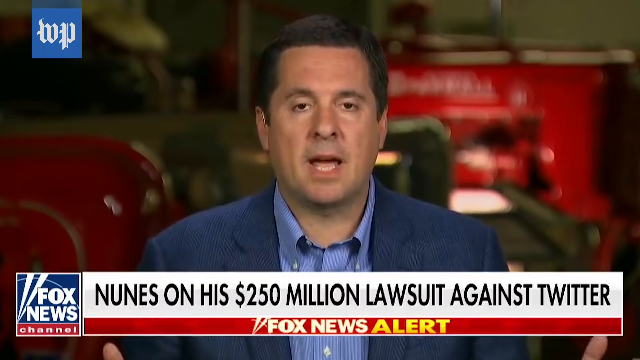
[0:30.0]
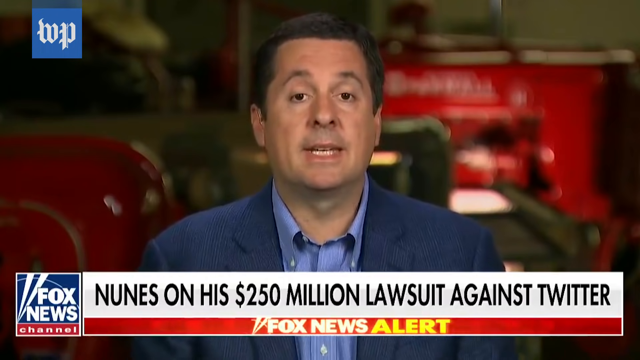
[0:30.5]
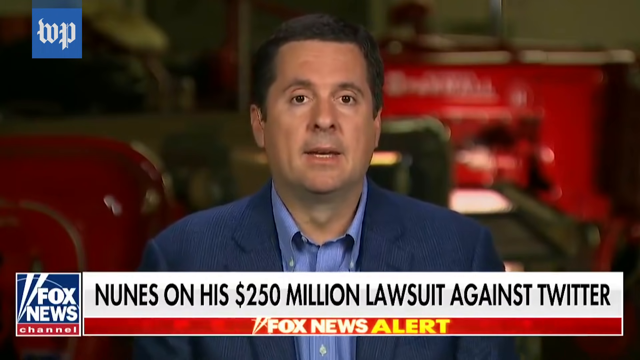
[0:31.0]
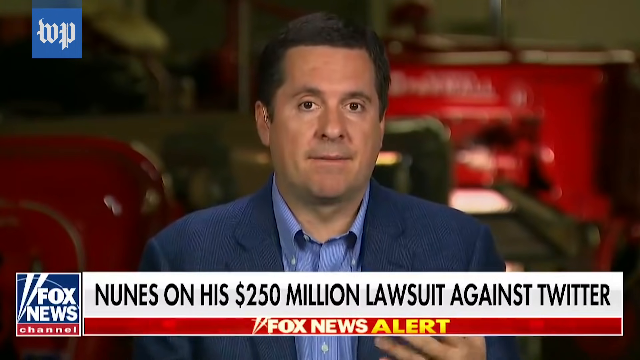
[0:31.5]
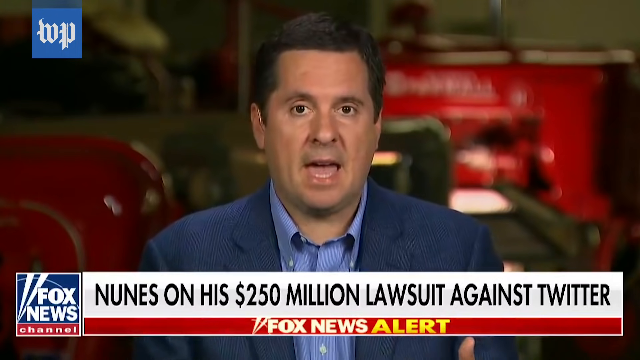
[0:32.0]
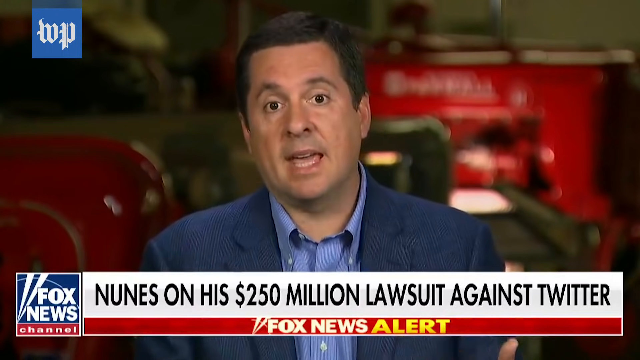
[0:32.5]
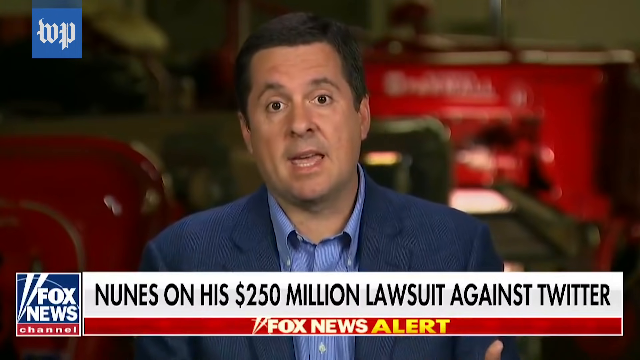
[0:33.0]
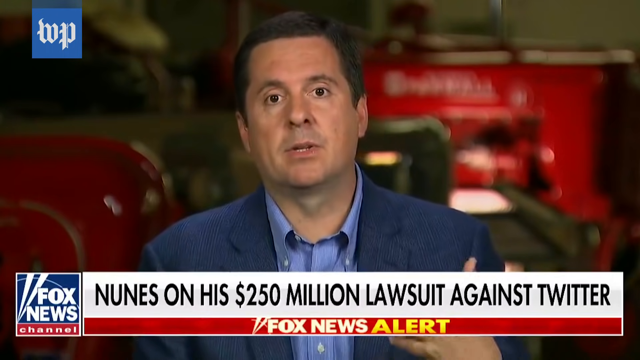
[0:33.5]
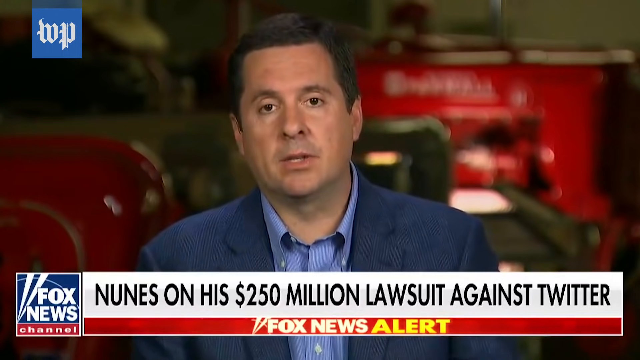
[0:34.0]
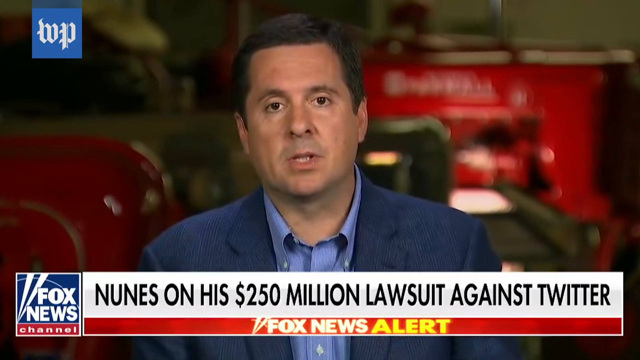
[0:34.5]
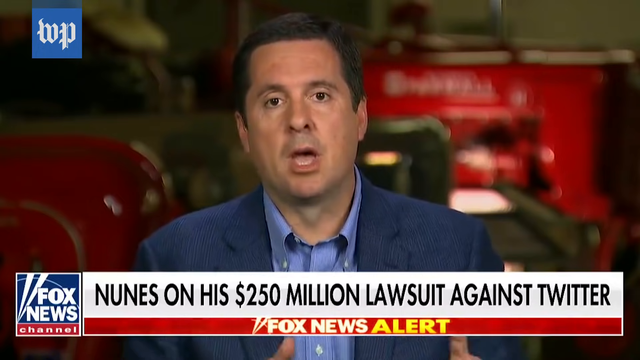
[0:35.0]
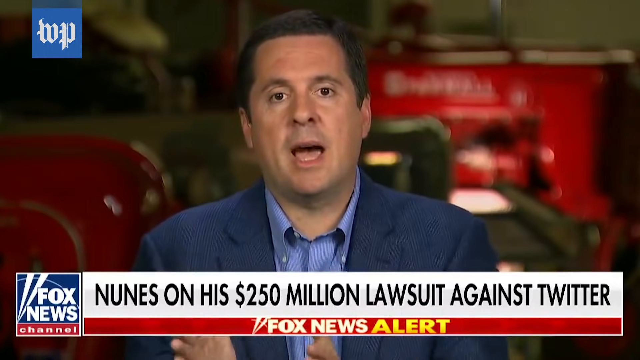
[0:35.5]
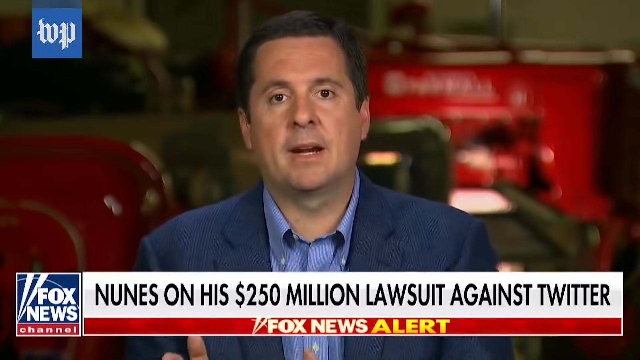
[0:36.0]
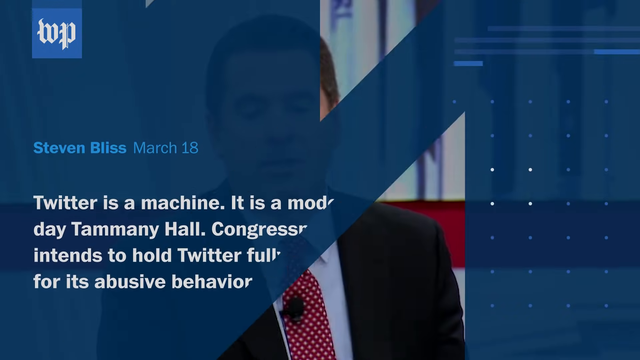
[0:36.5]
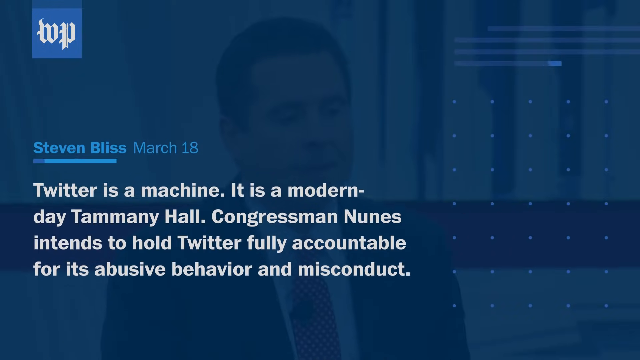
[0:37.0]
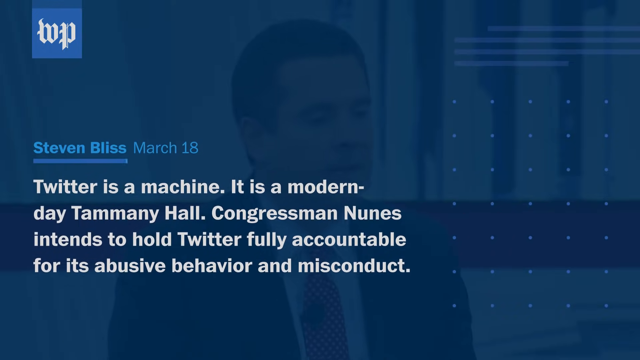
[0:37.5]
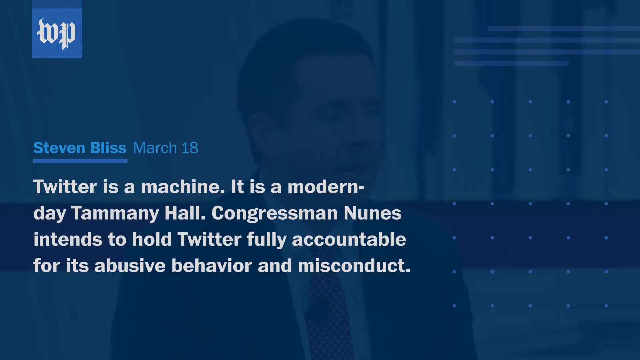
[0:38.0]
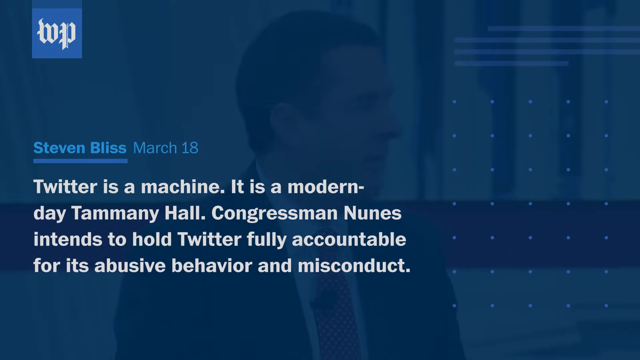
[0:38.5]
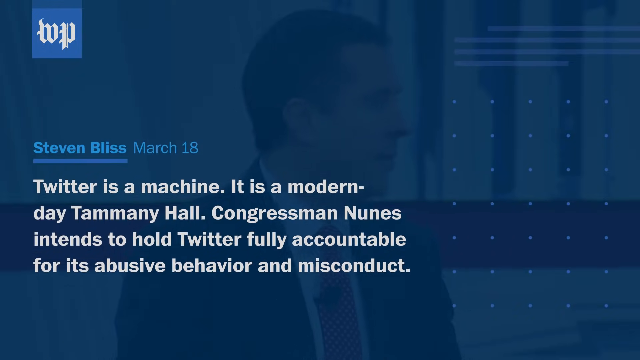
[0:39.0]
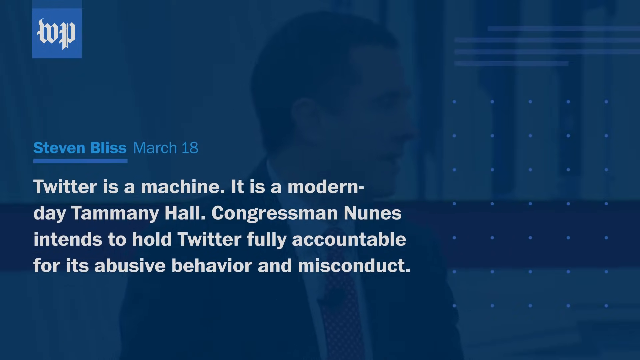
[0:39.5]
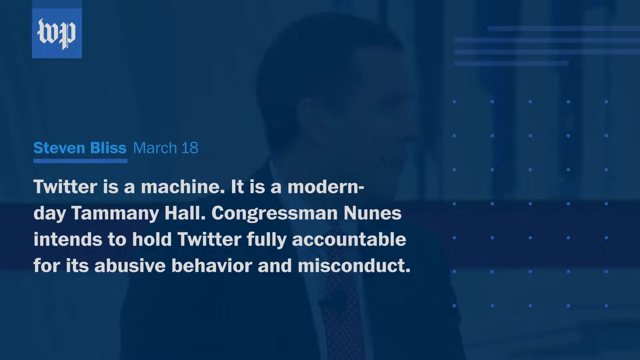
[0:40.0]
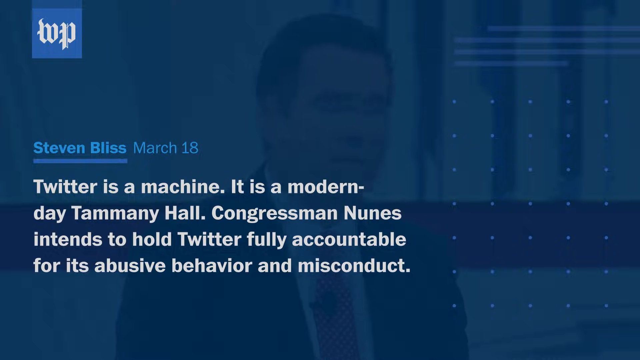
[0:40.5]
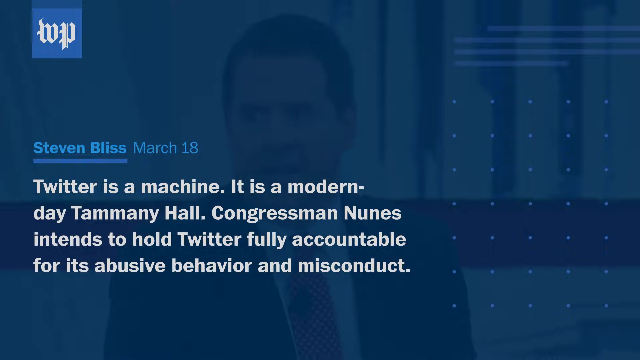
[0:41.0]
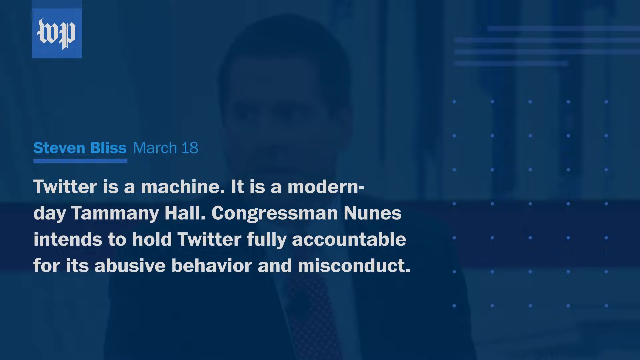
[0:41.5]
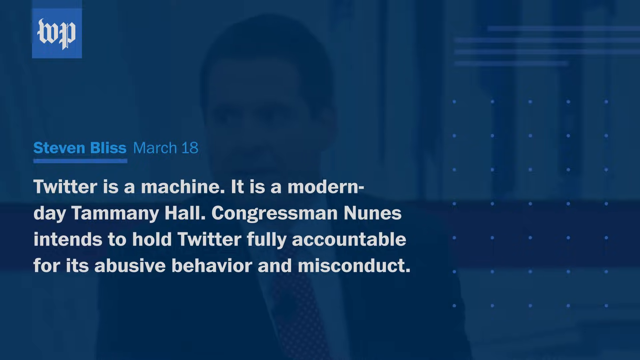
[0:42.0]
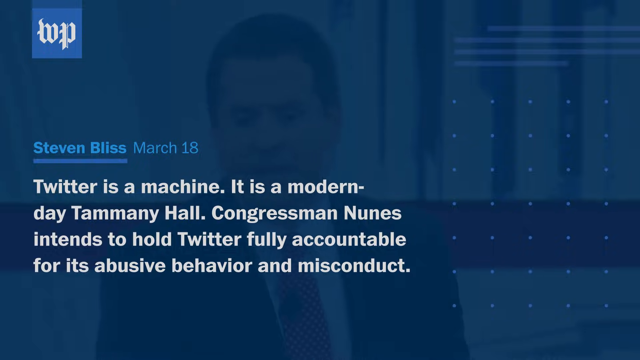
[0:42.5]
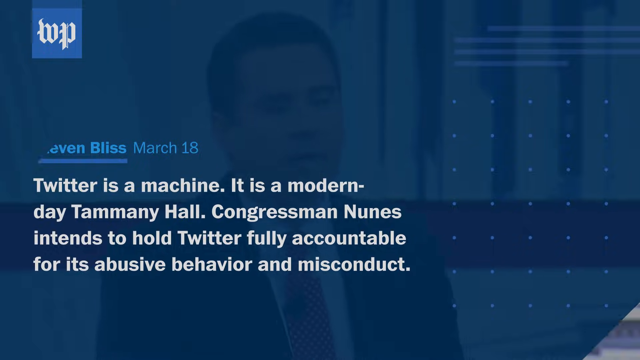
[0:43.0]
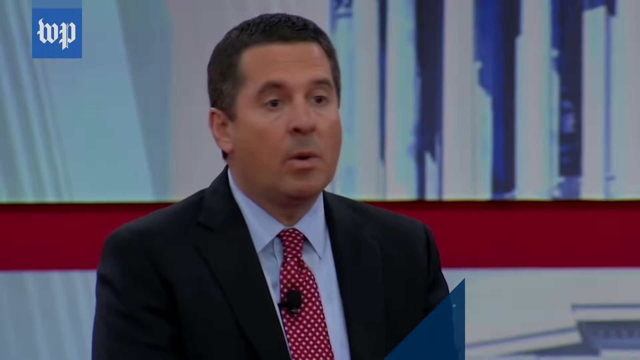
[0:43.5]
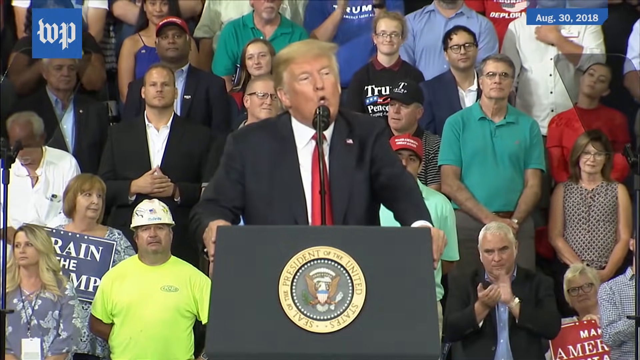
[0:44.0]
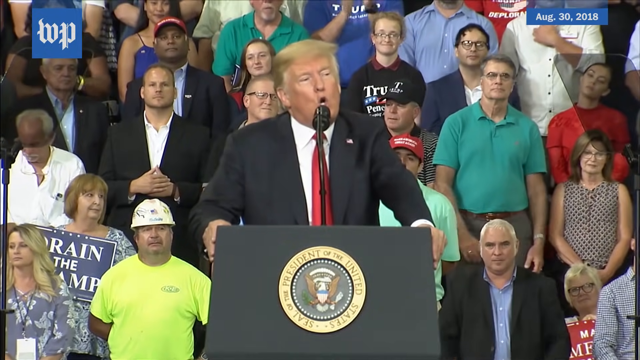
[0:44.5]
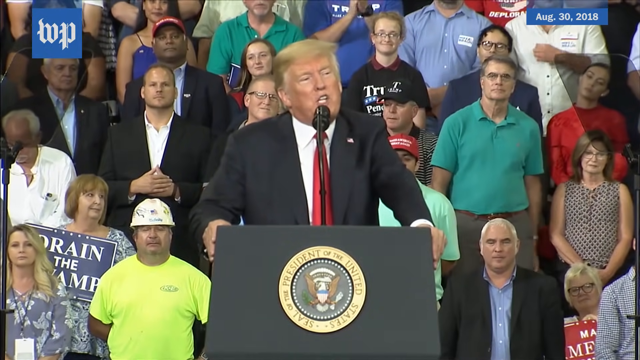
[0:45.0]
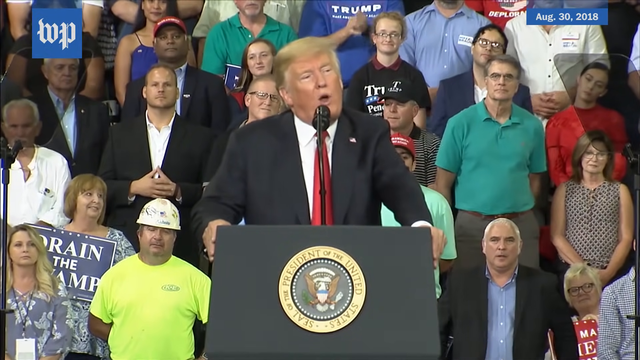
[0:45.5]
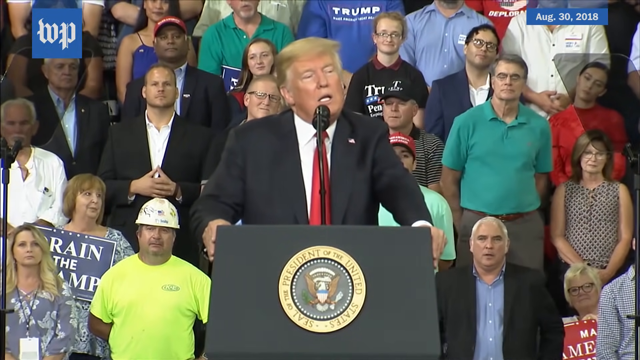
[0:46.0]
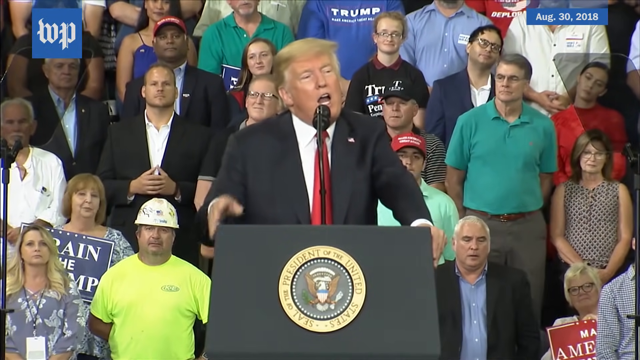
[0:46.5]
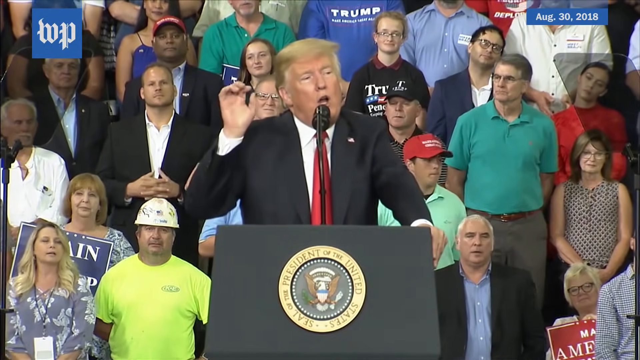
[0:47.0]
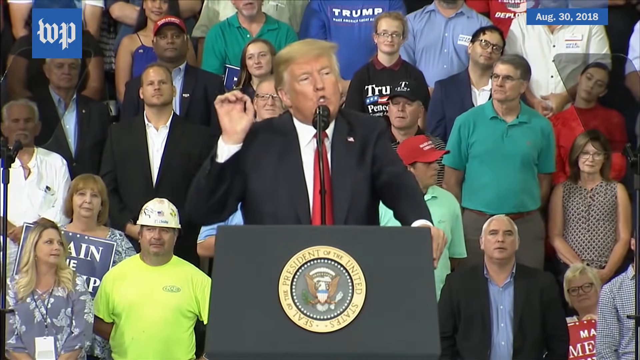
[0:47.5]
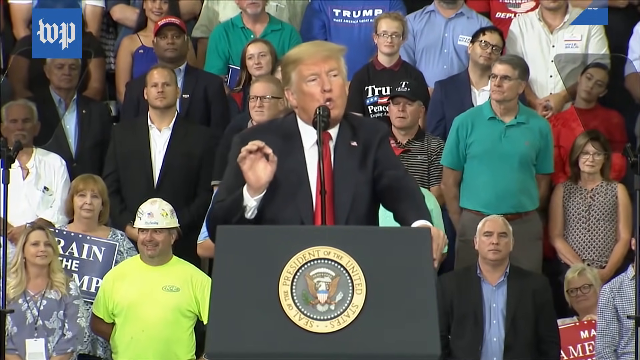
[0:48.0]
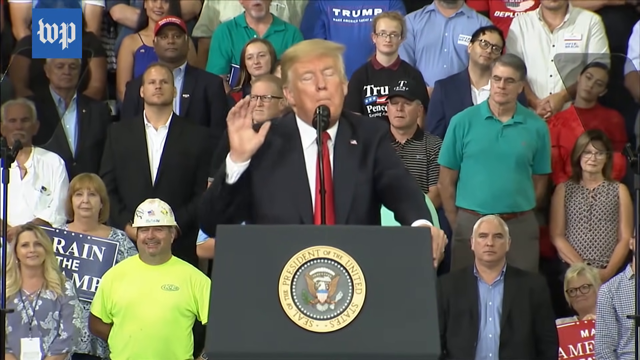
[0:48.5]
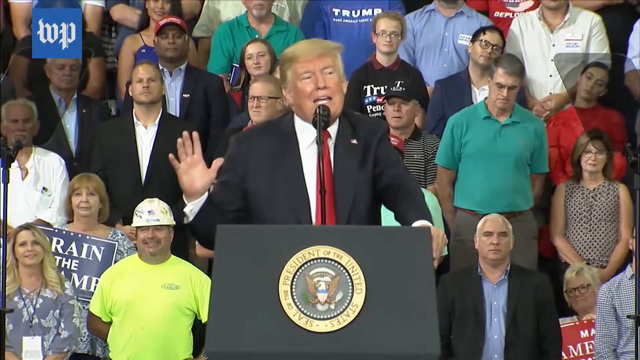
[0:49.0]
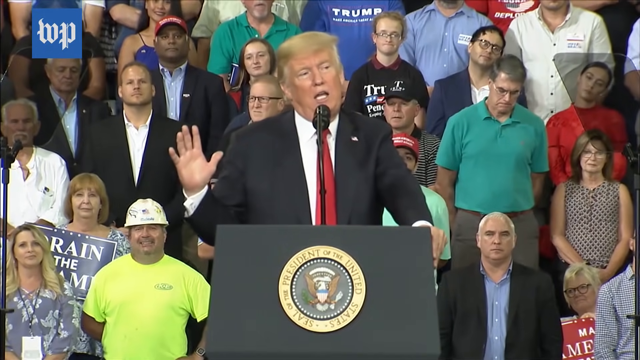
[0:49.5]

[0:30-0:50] The headline "Nunes on his $250 million lawsuit against Twitter" is on screen. The news reporter, a stout man with black hair, drowsy eyes and an open mouth, wearing a blue suit and white shirt, continues explaining, his eyes fixed on the camera, against a red background. Another screen pops up reading "Steven Blitz, March 18" with a statement that Twitter is a machine and "Congressman Nunes intends to hold Twitter fully accountable for its abusive behavior and misconduct." Donald Trump is then shown speaking to a crowd, wearing a black suit, red tie and white shirt. Behind him are many people dressed in different colors, some in black suits, others in T-shirts or shirts. Many are men and fewer are women; some are wearing goggles and others are not. Labels appear across the scene.